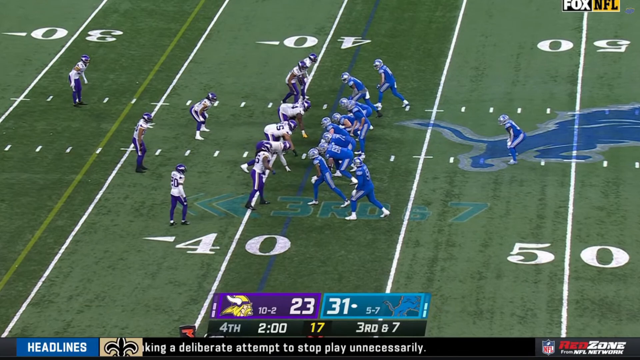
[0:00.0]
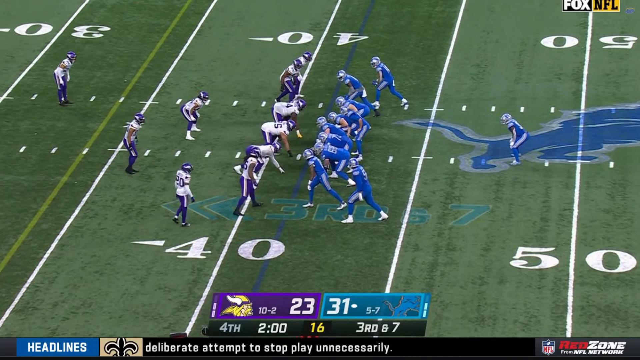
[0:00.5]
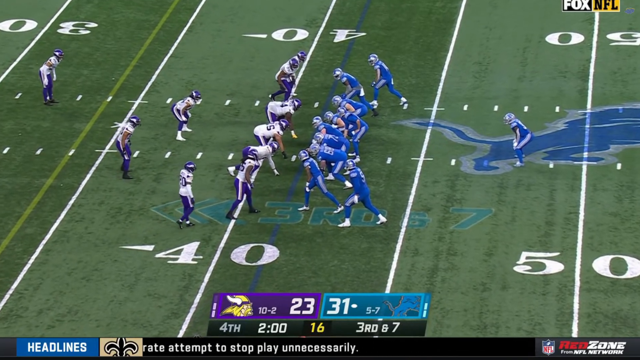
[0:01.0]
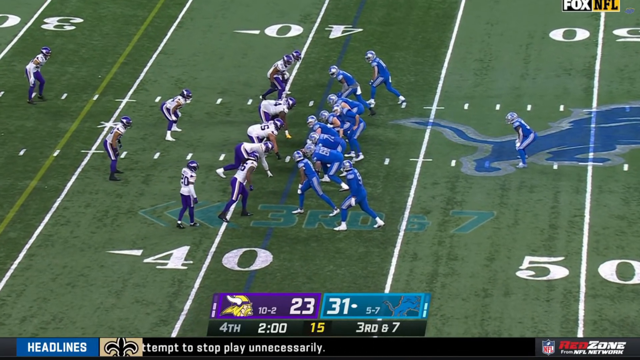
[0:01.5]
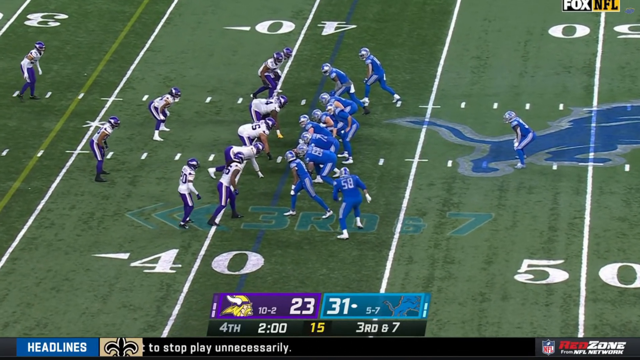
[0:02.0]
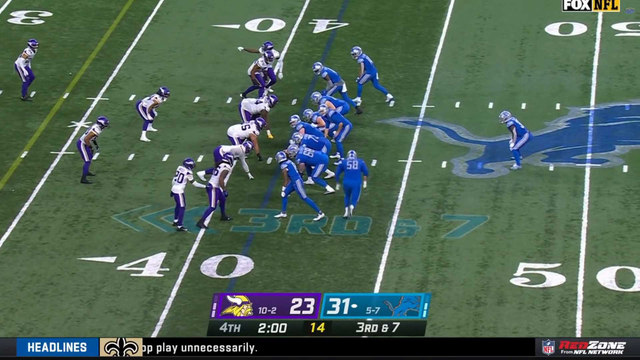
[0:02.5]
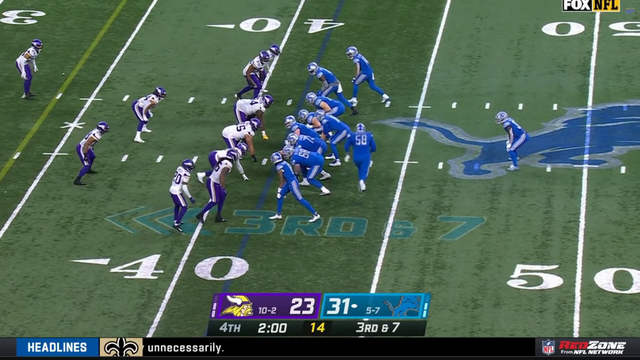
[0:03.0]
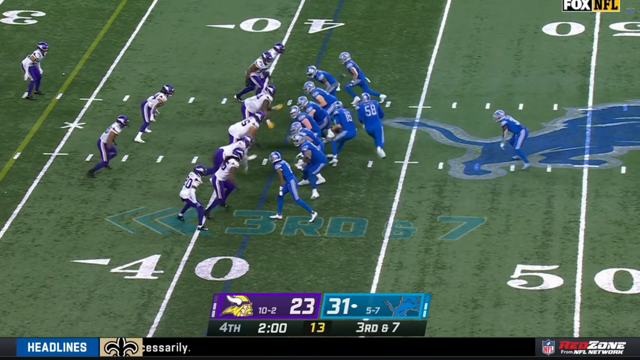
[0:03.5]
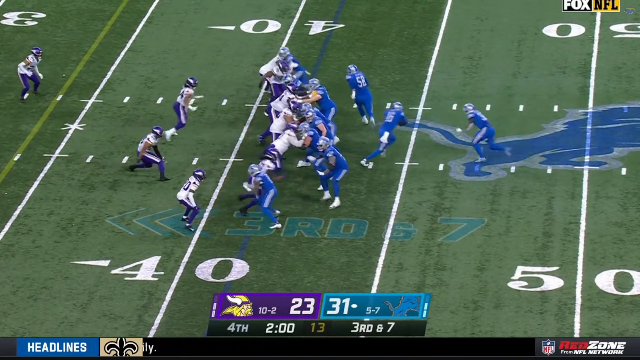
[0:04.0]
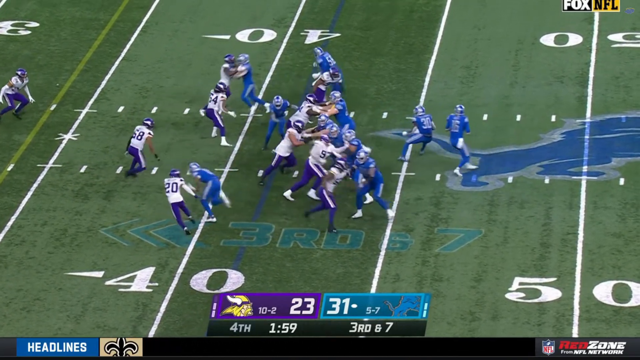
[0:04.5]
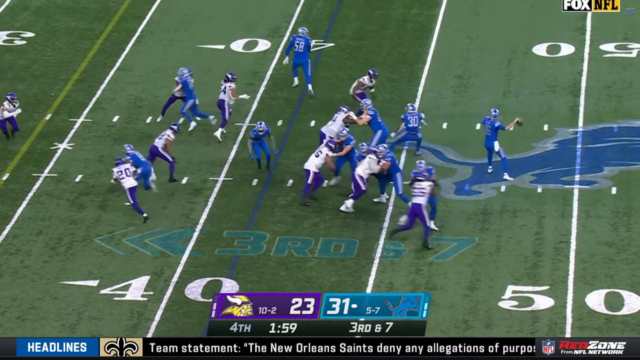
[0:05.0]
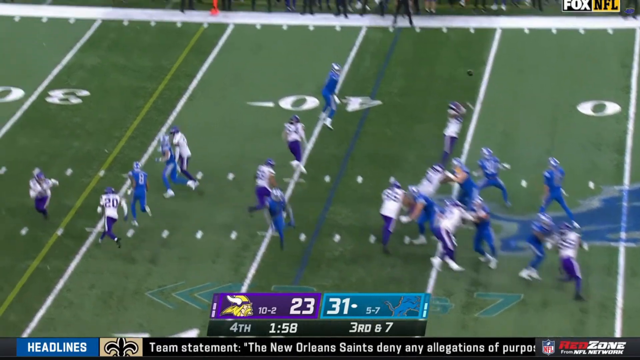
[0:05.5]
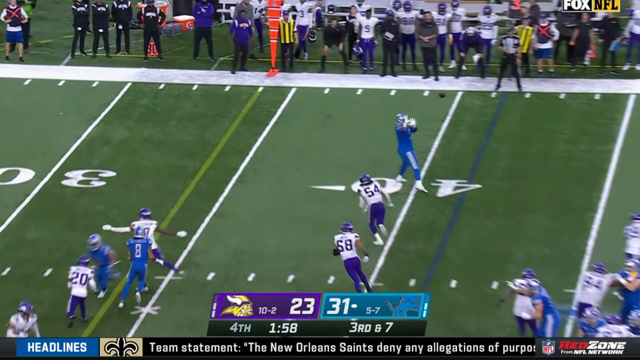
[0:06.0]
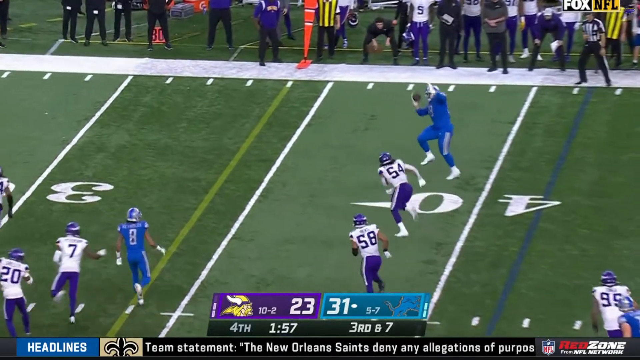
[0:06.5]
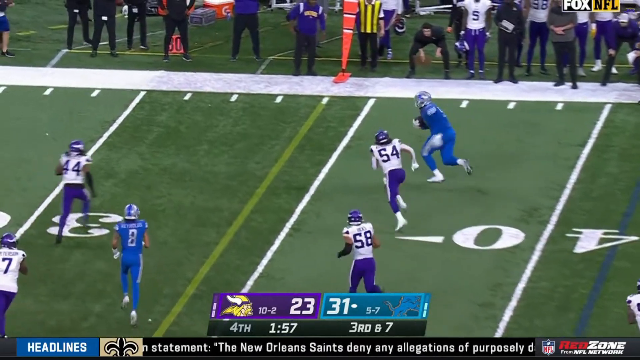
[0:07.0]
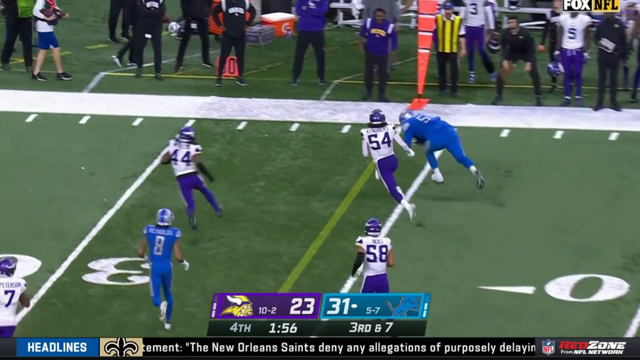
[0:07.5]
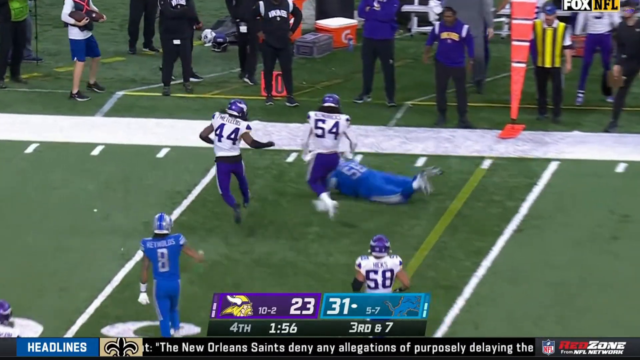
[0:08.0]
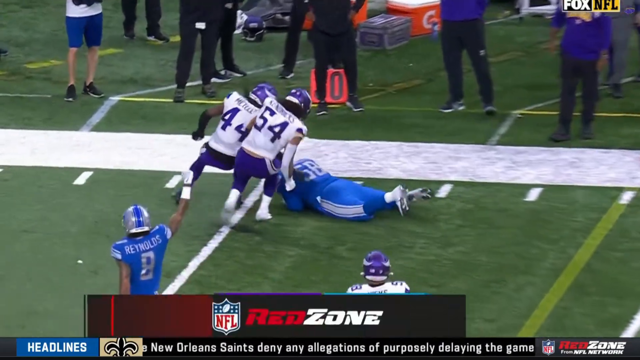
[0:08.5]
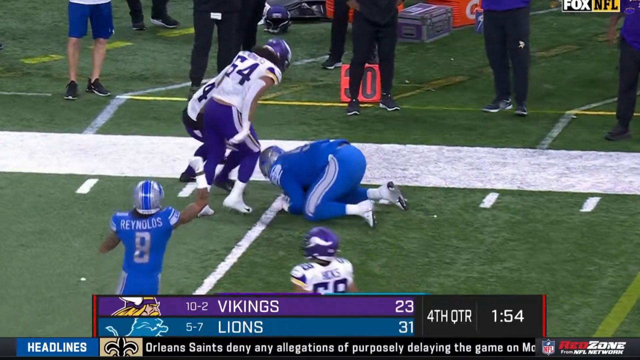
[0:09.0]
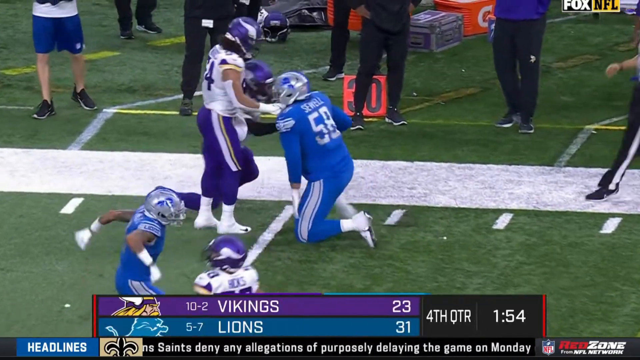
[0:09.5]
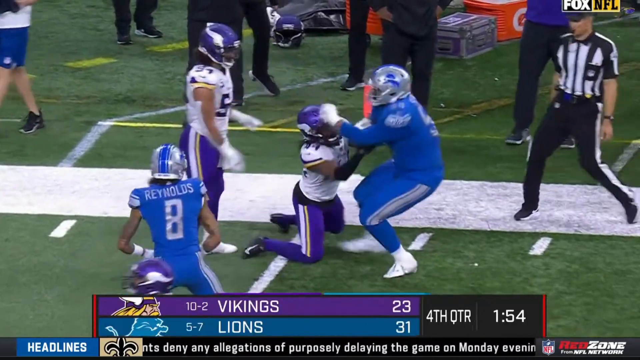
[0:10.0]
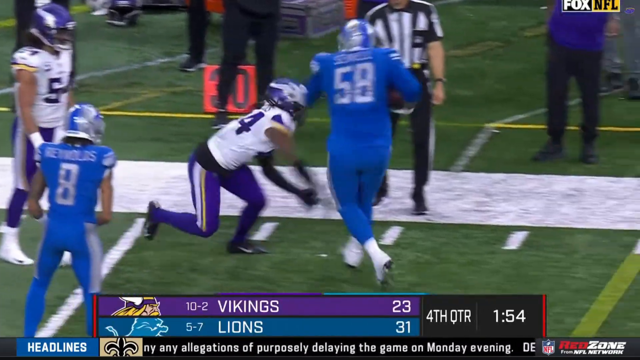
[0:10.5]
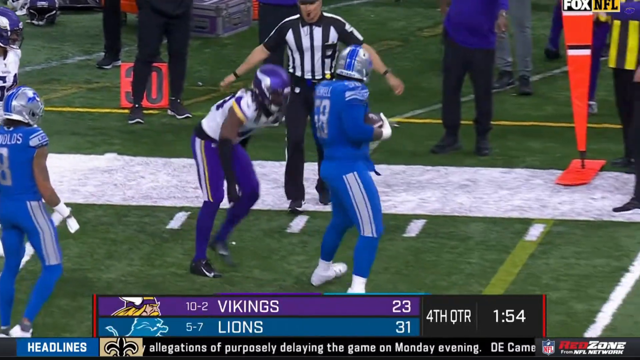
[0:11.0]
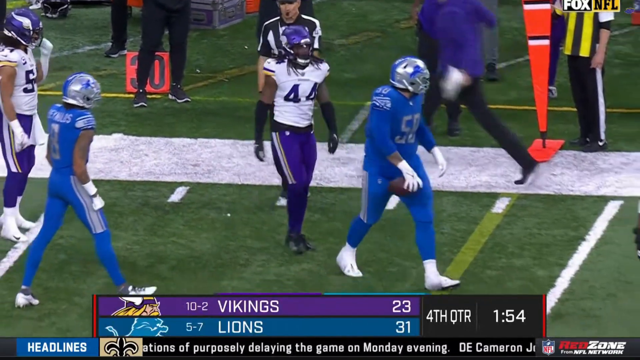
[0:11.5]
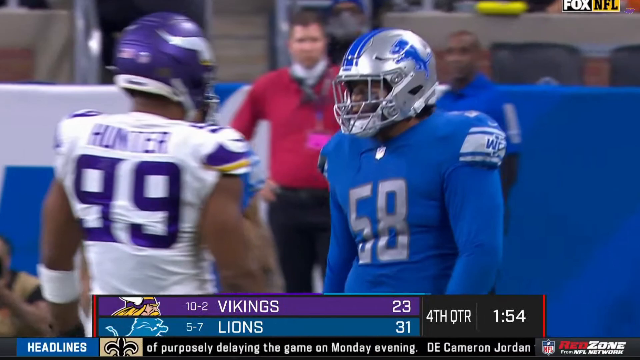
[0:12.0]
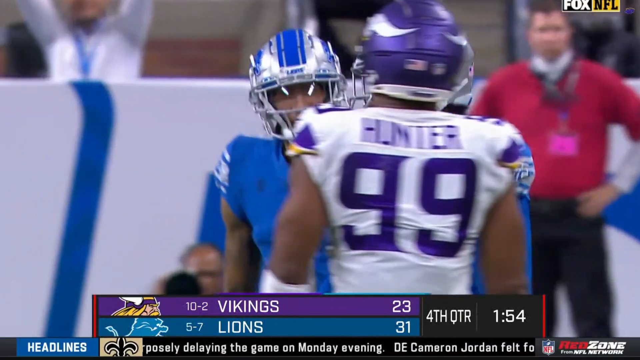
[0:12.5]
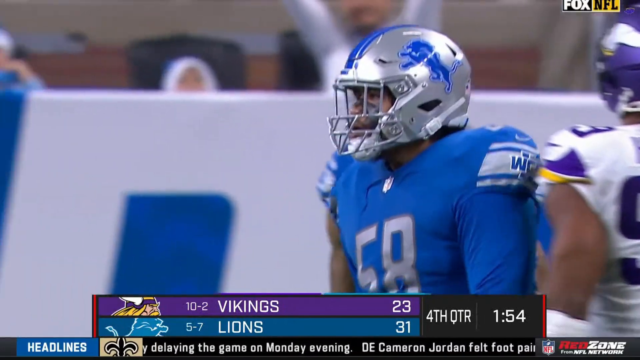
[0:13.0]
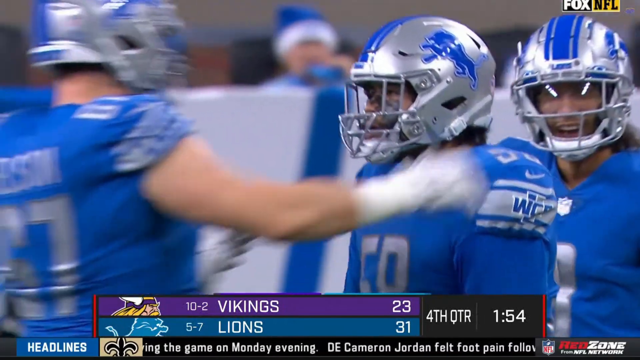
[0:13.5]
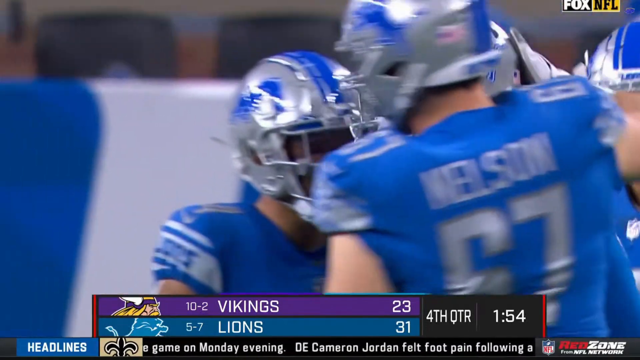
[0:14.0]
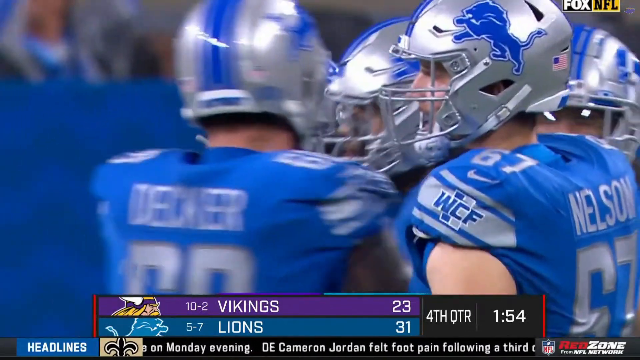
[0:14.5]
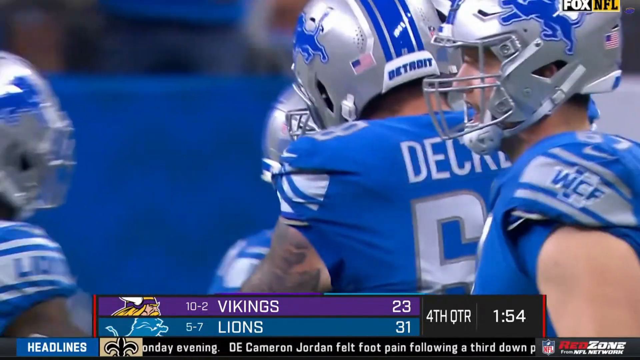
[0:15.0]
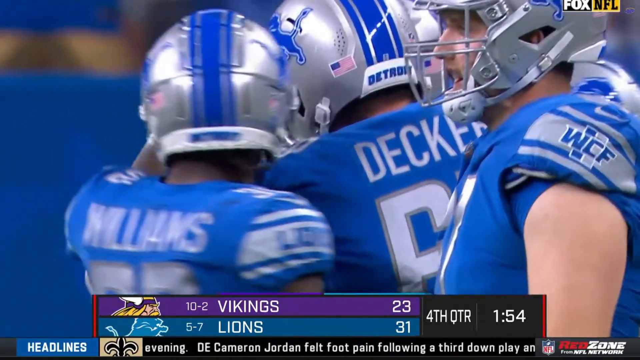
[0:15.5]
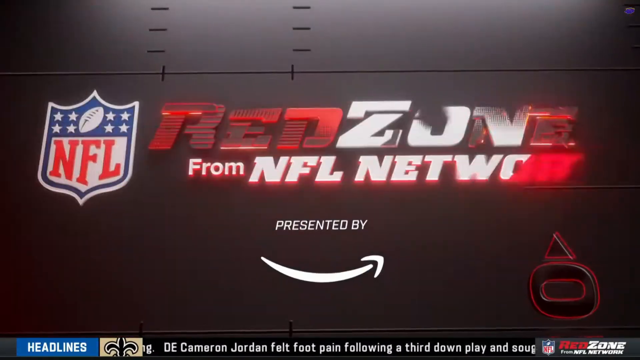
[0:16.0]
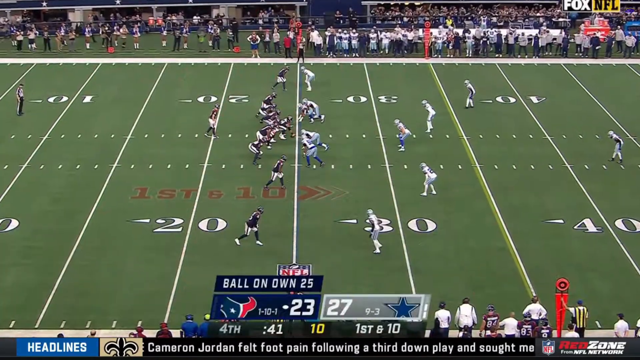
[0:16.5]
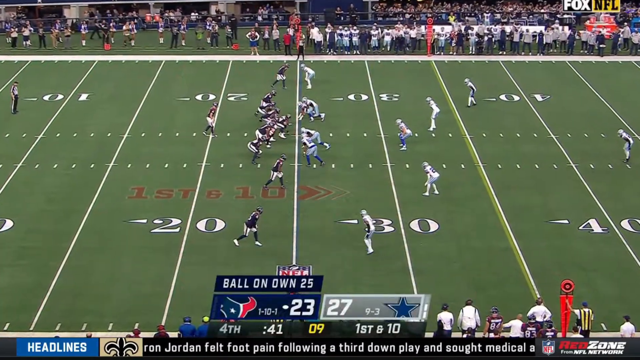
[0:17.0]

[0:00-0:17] An NFL on Fox broadcast shows a game between the Detroit Lions and the Minnesota Vikings. Detroit leads 31 to 23 in the fourth quarter with under two minutes to go, and the play is third down and seven. The tight end goes in motion, running behind his offensive line and the quarterback from the left side of the ball to the right side. When the play starts, the quarterback drops back and passes the ball to him on the right side, and he runs for a first down. As he comes up after getting the first down, the ball comes a little loose out of his hand, and a Minnesota Vikings defender tries to swat it out of his hand.